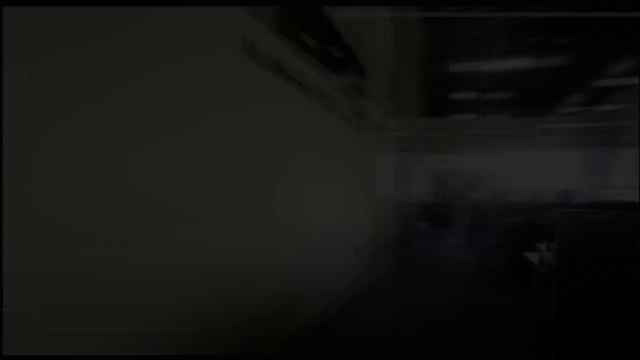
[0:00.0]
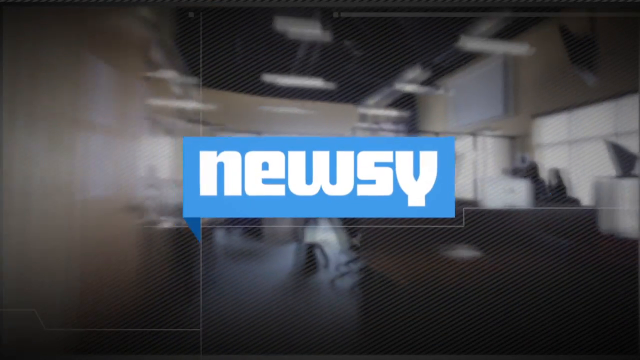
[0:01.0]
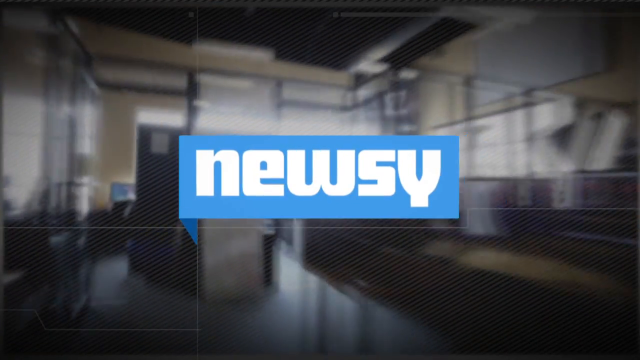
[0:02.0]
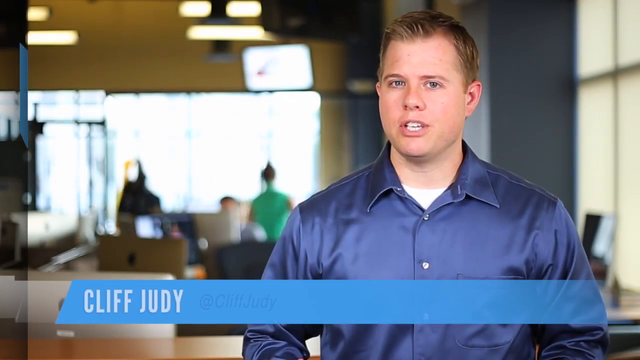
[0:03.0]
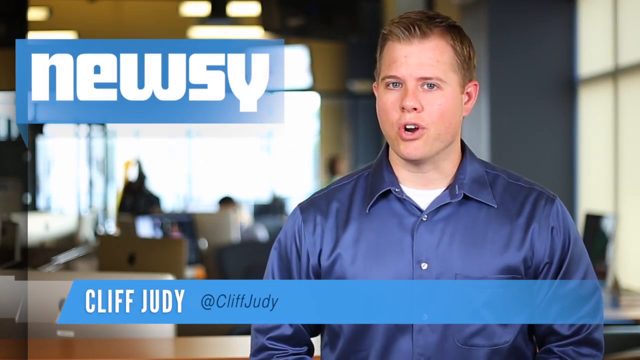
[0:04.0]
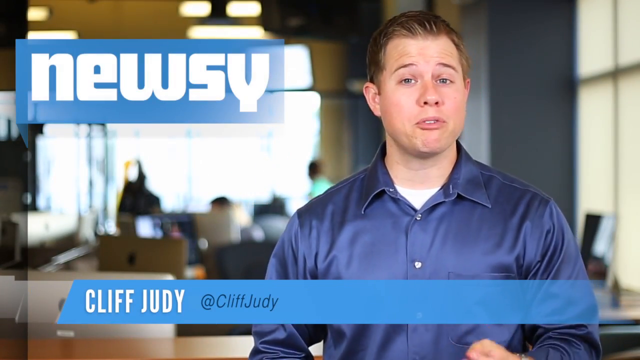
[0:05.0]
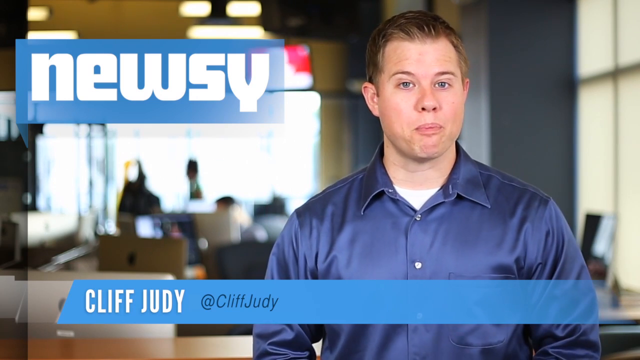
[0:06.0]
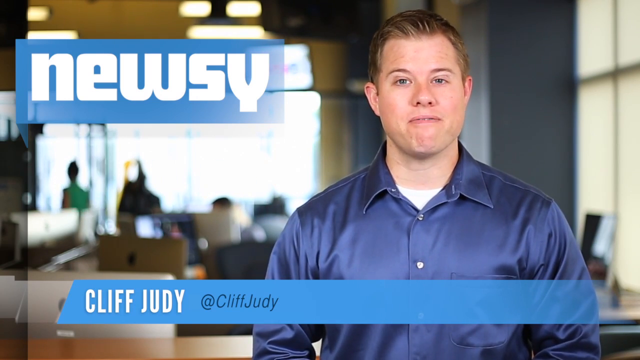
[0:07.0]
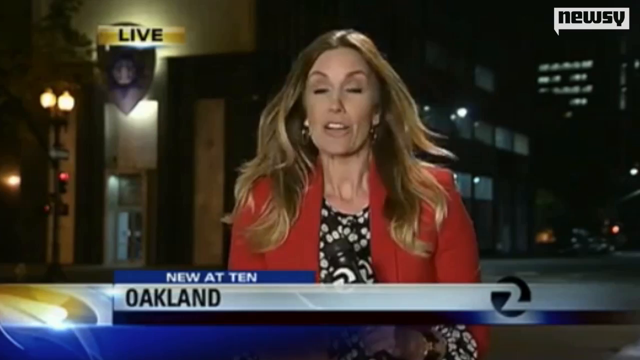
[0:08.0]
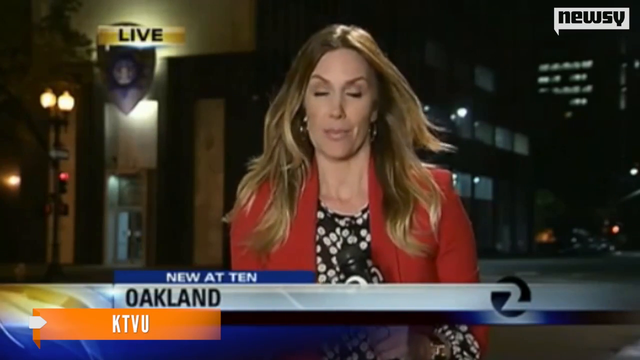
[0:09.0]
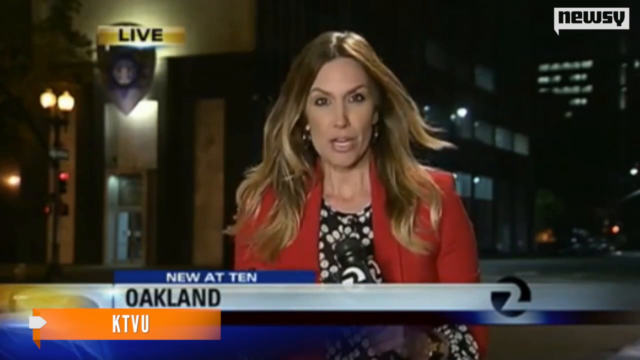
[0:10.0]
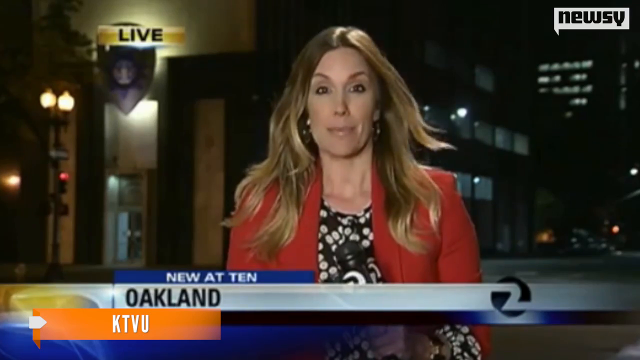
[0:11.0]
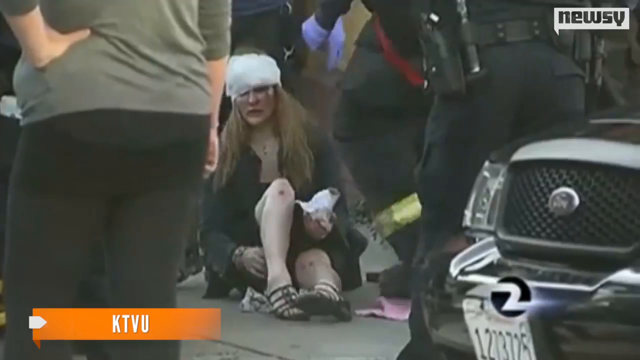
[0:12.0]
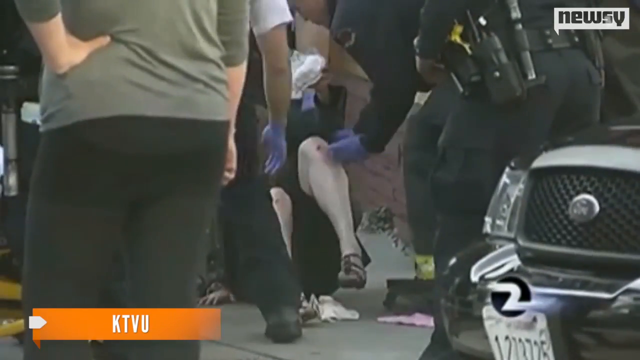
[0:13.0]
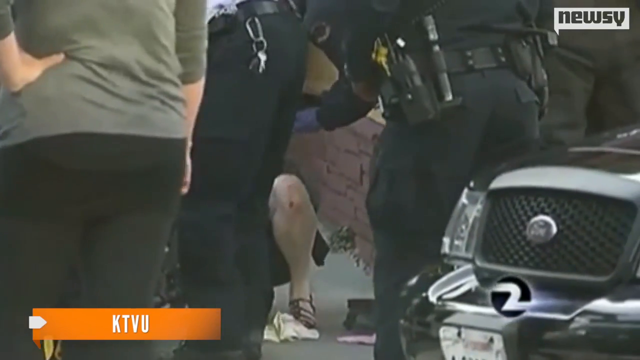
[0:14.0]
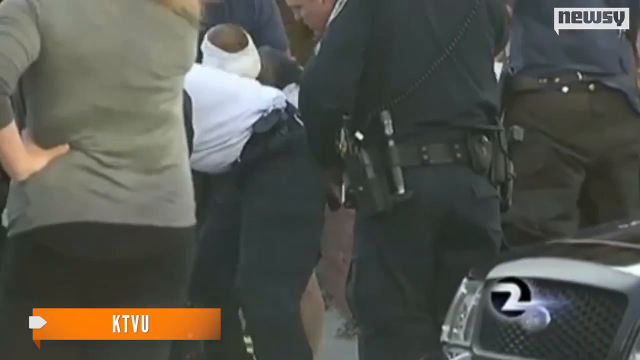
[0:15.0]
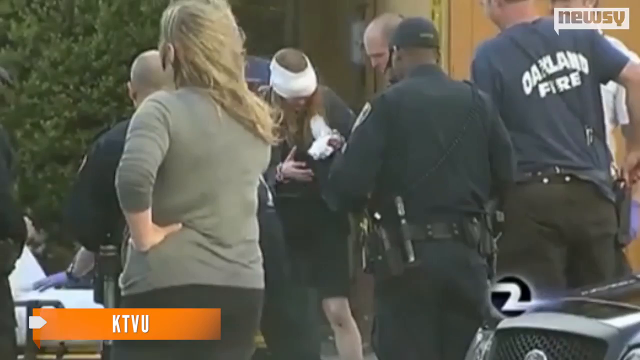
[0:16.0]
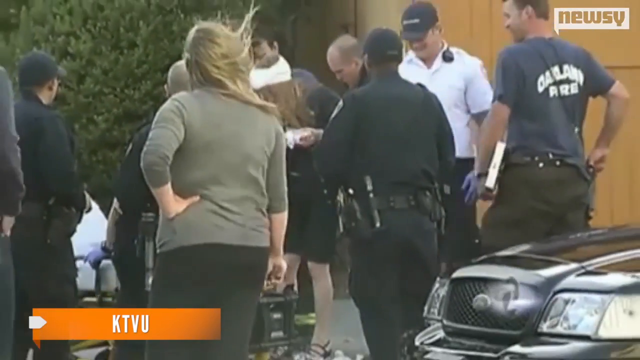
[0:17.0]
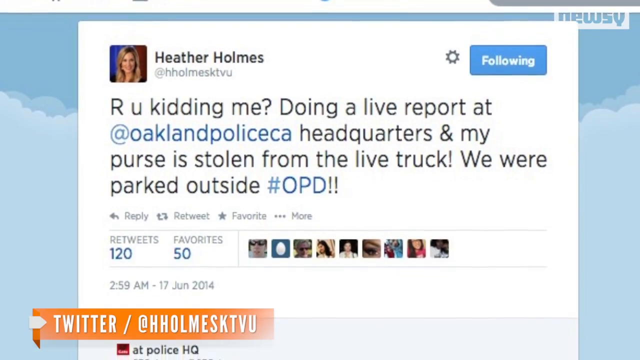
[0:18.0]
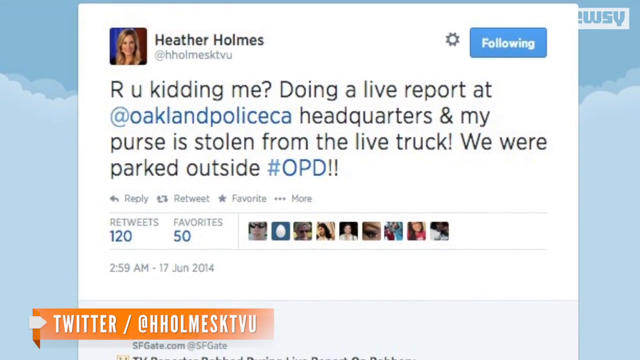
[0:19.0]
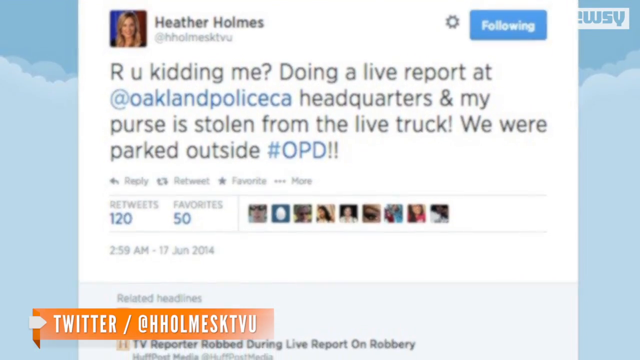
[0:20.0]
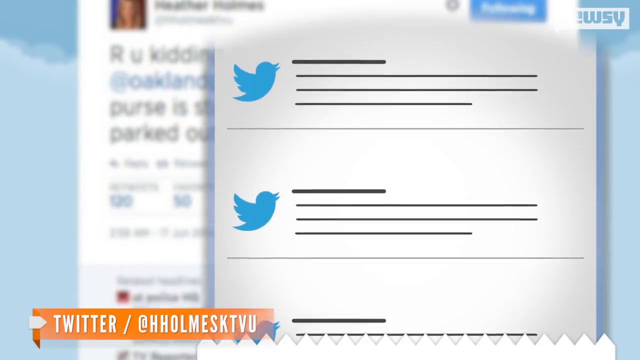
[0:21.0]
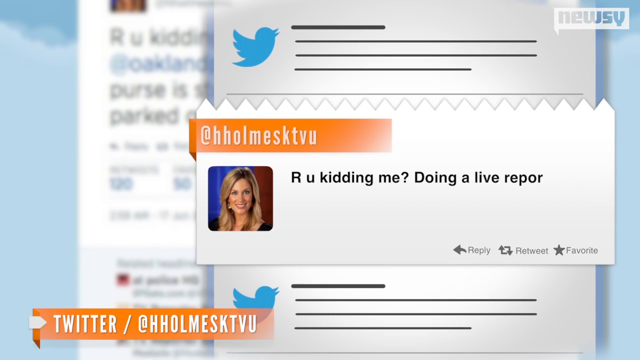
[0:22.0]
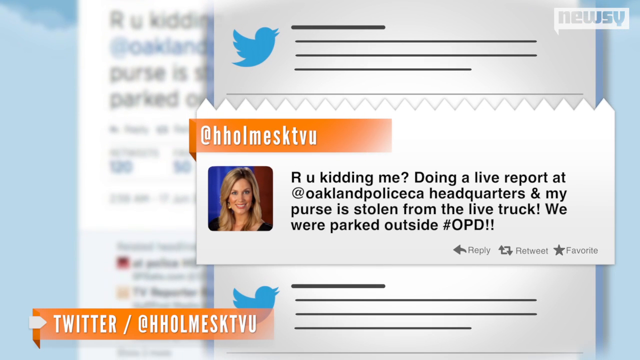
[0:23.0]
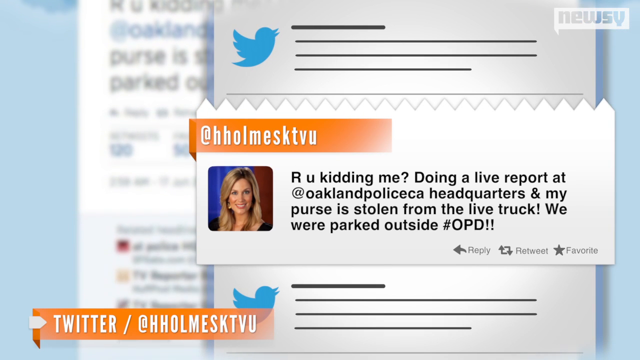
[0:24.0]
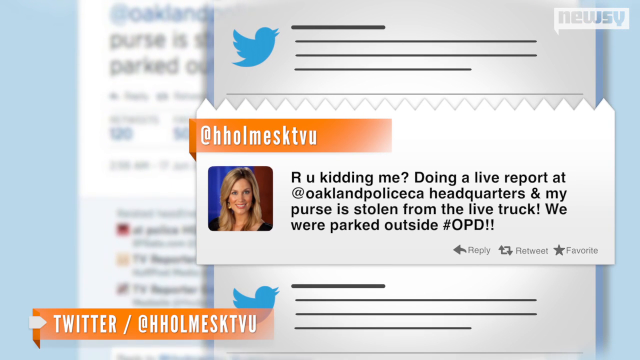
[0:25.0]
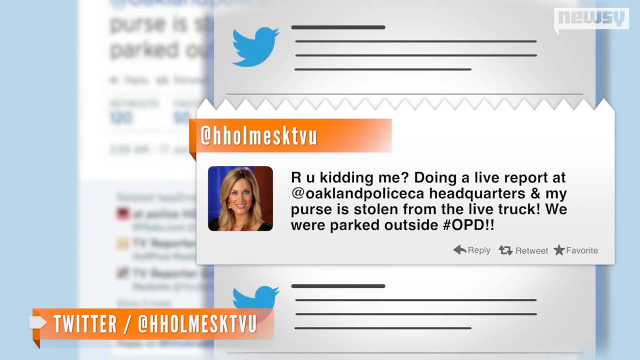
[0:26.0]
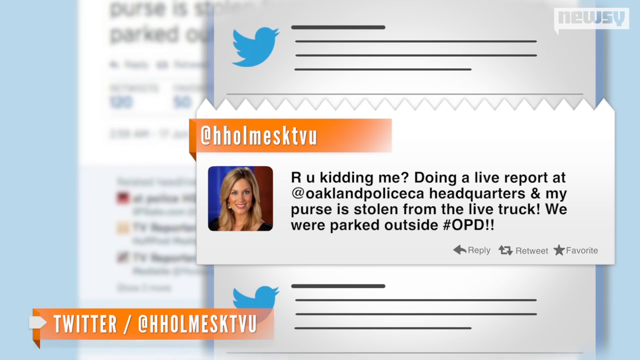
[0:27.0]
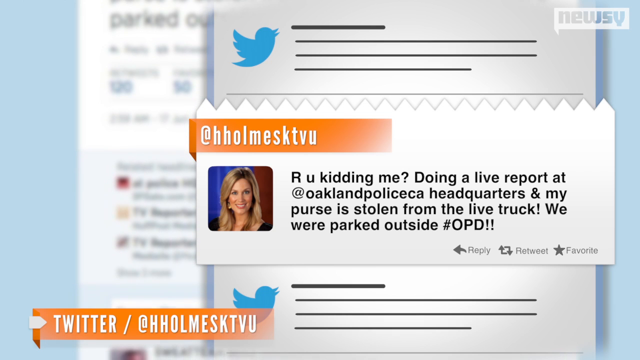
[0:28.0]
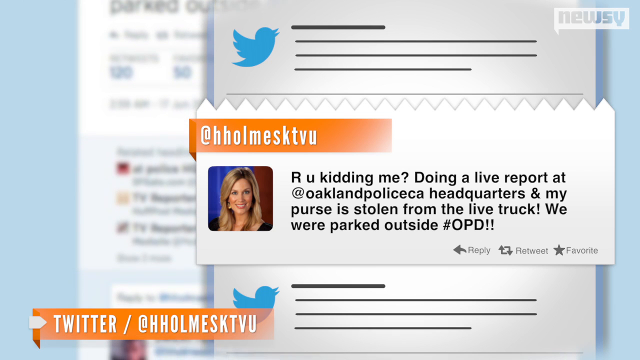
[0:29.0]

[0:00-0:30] The camera moves fast through an office, passing some stuff and some people. The Newsy logo then appears in the middle of the screen in white letters on a blue background; as the camera moves, the sides of the image get blurry. A man appears next, wearing a blue shirt buttoned up almost to the neck; he has short blonde hair and is clean shaven, and his name is shown as Cliff Judy. He talks to the camera inside an office, with people at screens behind him, windows and seats around, and some people moving in the background. The video then cuts to another woman, with the location shown as Oakland and a header reading "New at 10". Next it cuts to what appears to be some kind of accident, followed by a post mentioning a fire department headquarters and a stolen purse, with the text "We were parked outside." The post is by Heather Holmes and has 120 retweets and 50 favorites. An edited version of the post then appears on the right side of the screen, with a woman in the middle.